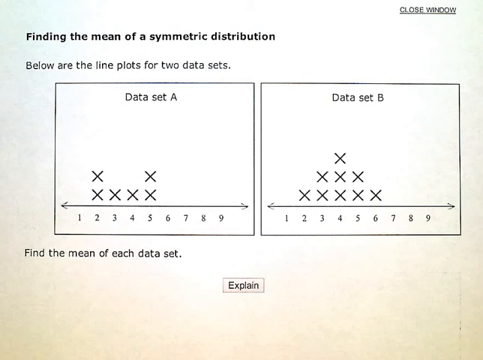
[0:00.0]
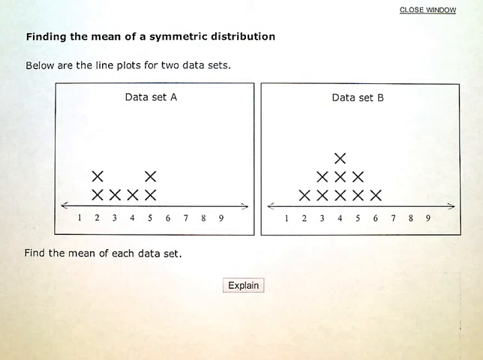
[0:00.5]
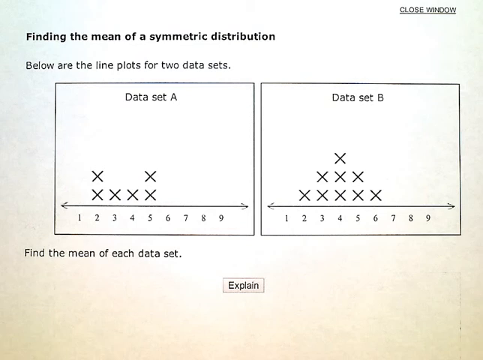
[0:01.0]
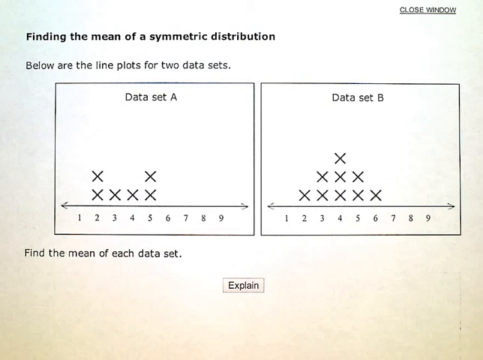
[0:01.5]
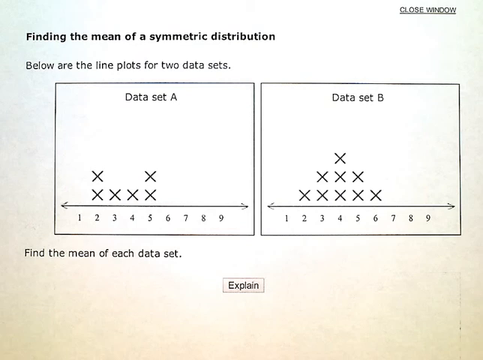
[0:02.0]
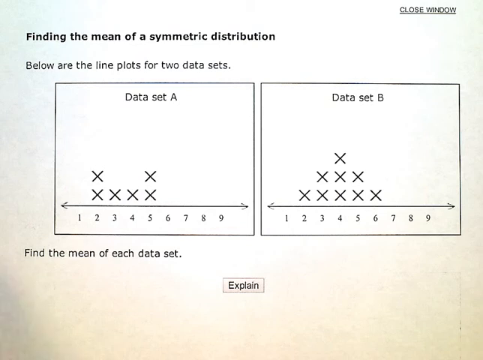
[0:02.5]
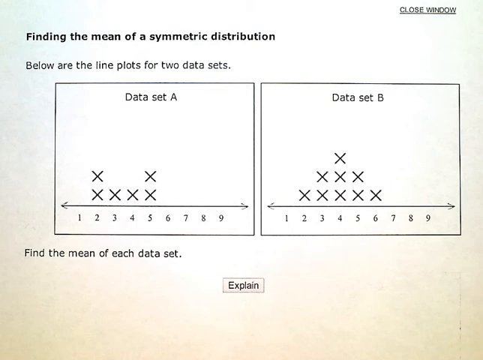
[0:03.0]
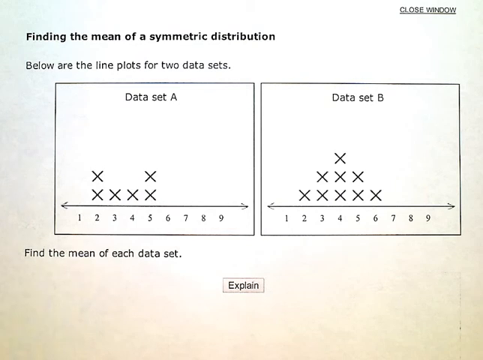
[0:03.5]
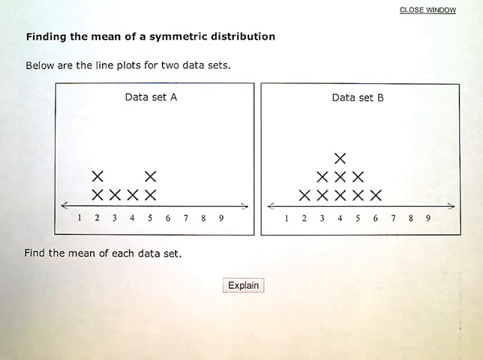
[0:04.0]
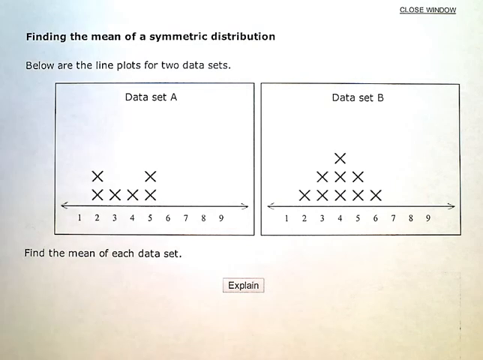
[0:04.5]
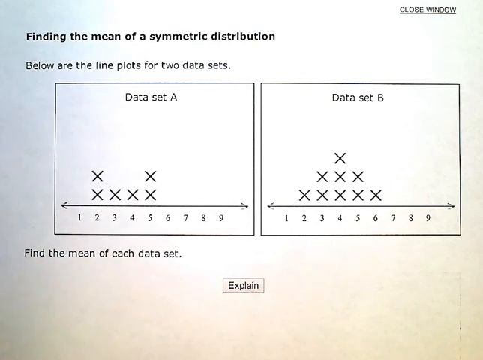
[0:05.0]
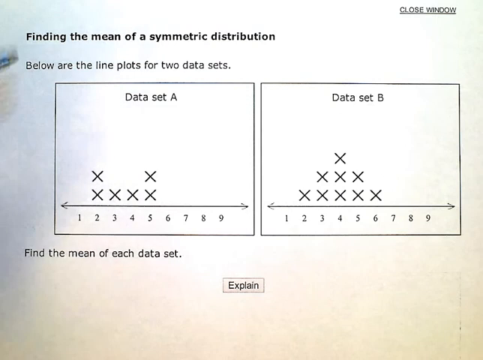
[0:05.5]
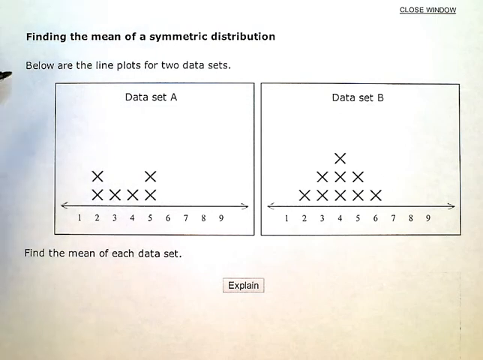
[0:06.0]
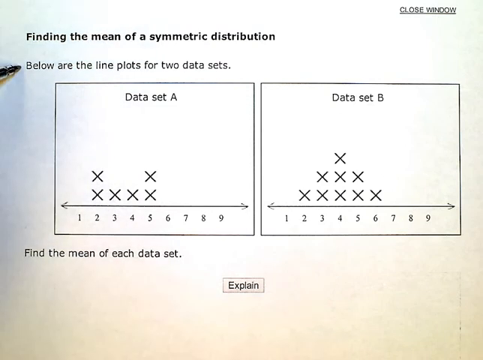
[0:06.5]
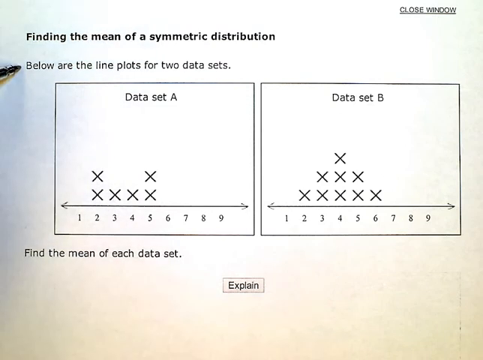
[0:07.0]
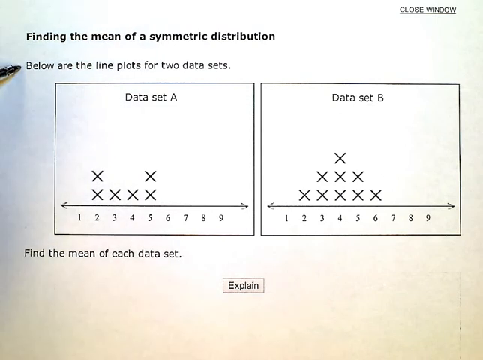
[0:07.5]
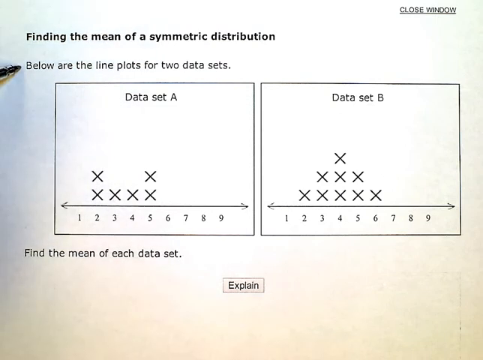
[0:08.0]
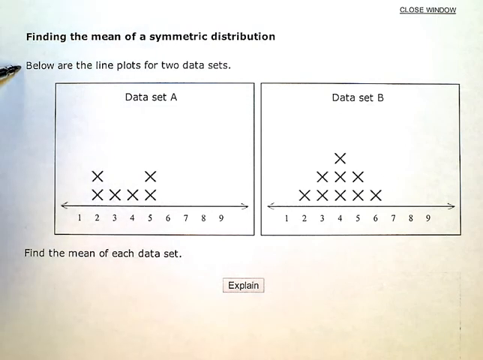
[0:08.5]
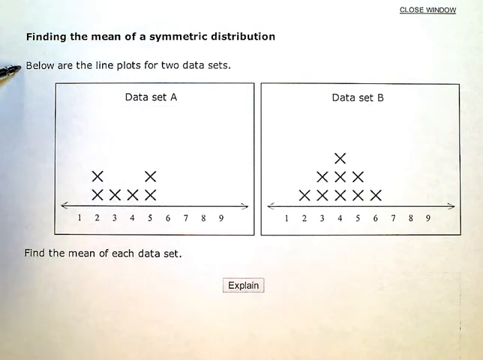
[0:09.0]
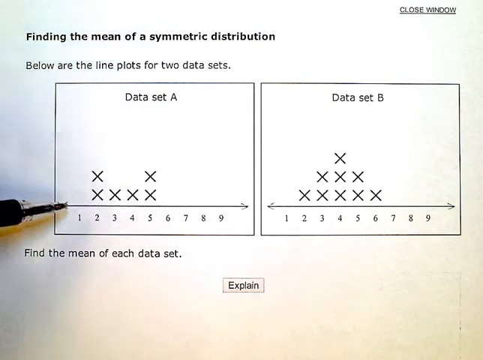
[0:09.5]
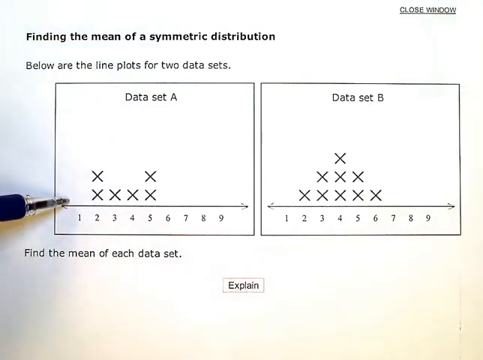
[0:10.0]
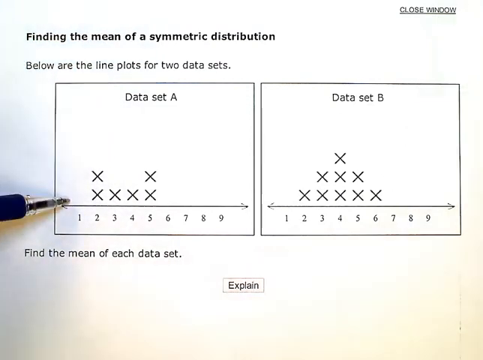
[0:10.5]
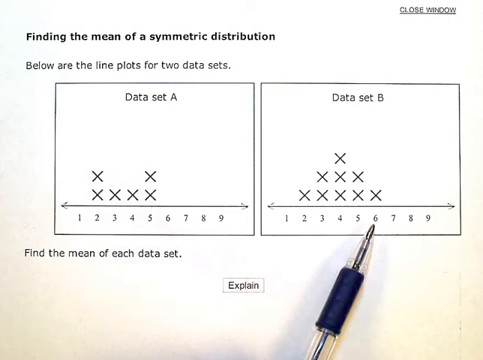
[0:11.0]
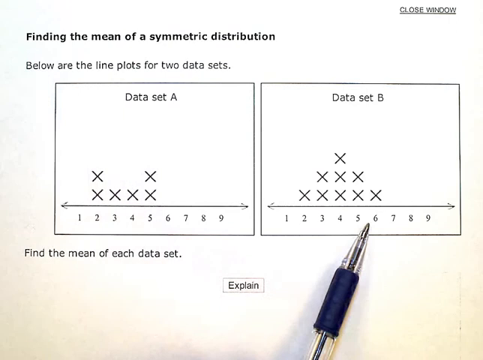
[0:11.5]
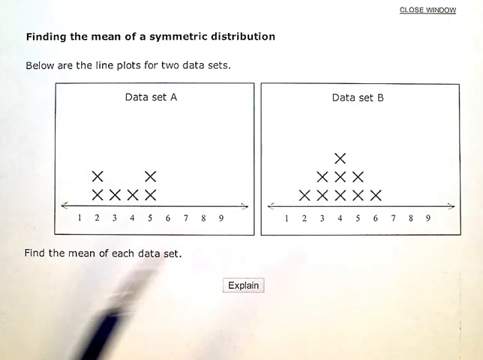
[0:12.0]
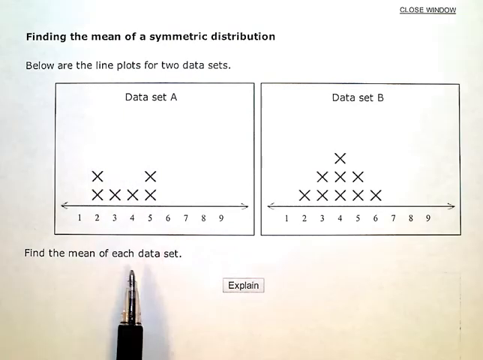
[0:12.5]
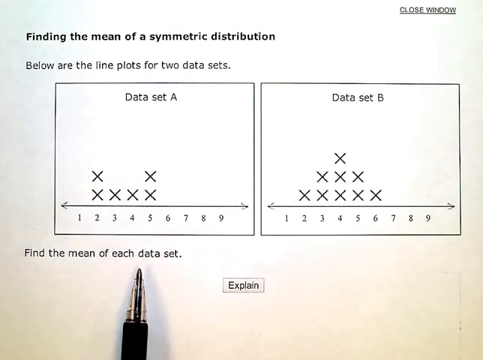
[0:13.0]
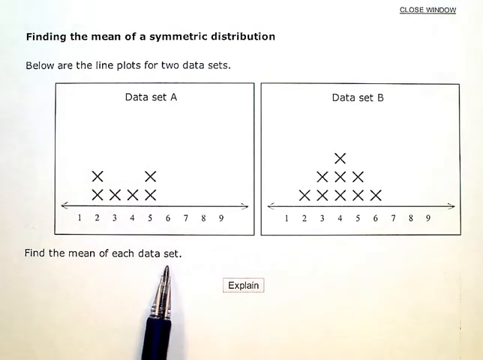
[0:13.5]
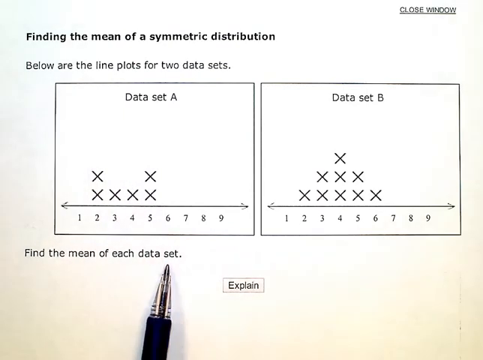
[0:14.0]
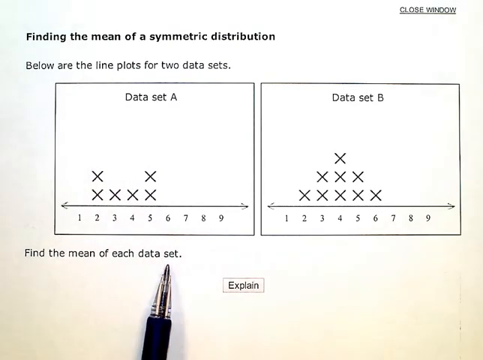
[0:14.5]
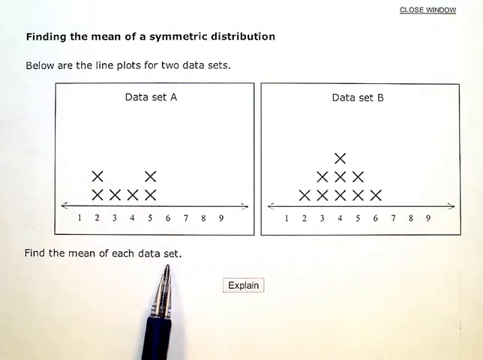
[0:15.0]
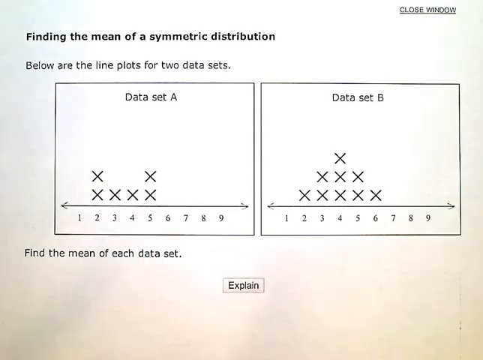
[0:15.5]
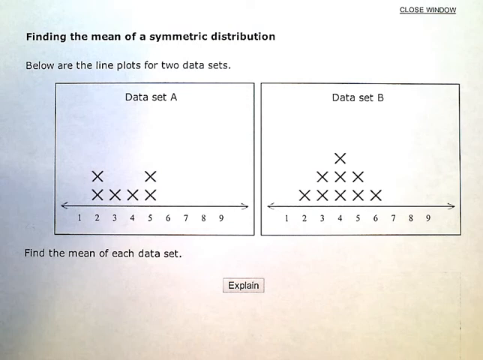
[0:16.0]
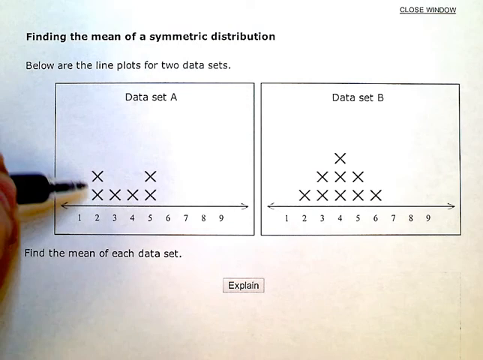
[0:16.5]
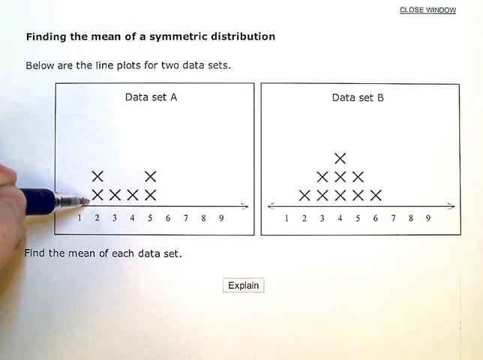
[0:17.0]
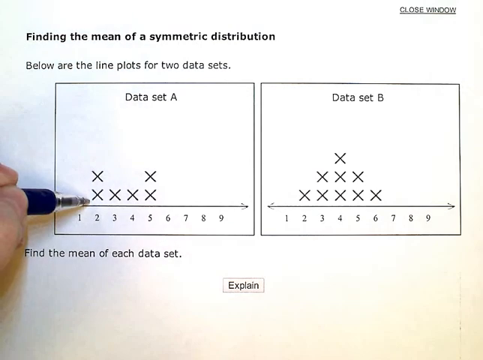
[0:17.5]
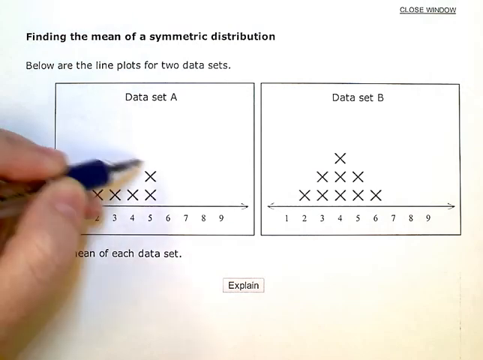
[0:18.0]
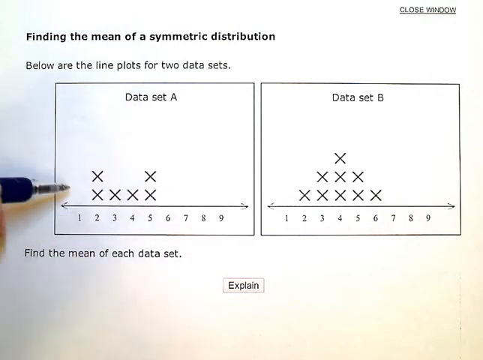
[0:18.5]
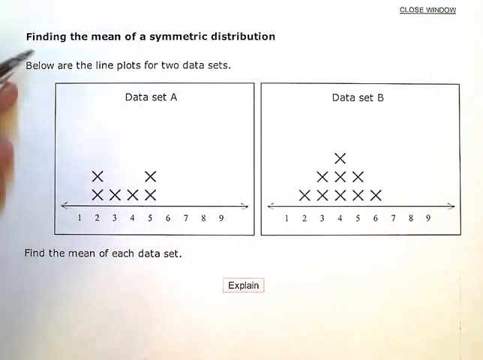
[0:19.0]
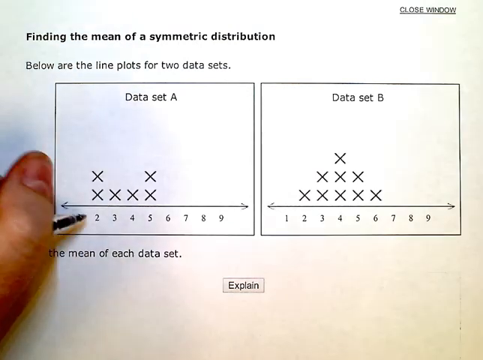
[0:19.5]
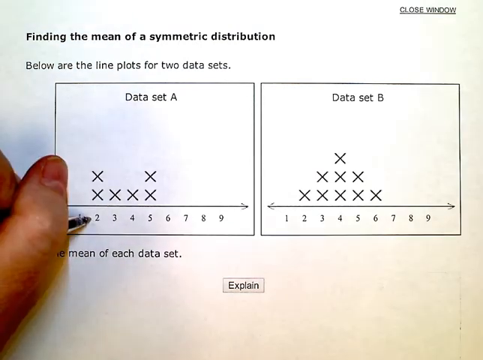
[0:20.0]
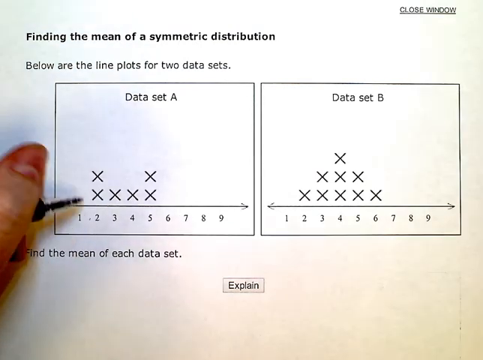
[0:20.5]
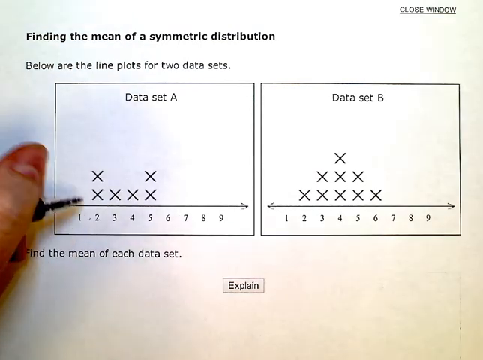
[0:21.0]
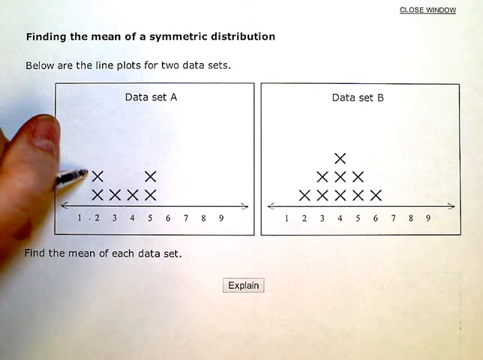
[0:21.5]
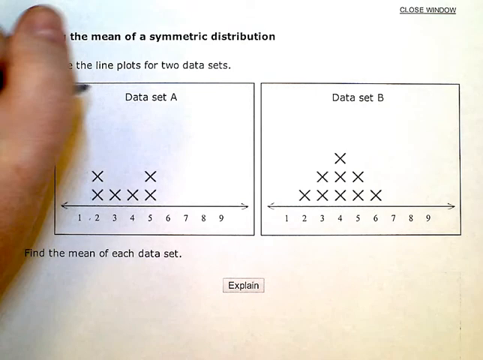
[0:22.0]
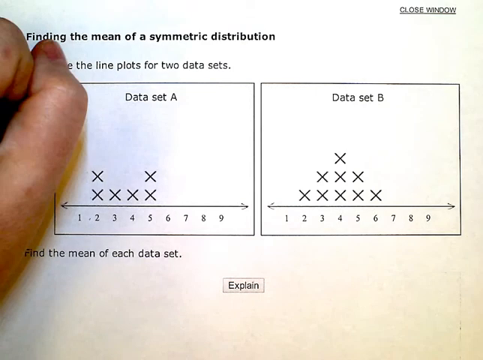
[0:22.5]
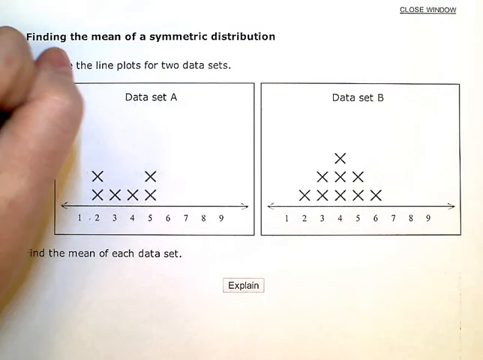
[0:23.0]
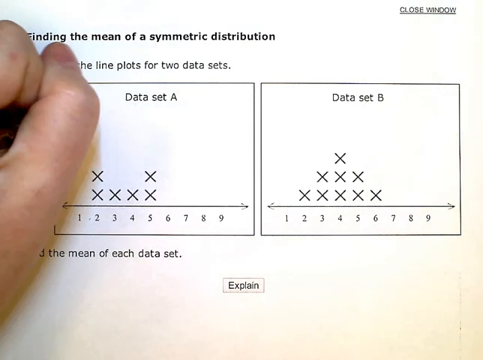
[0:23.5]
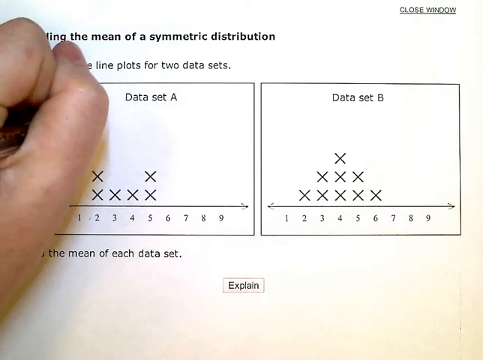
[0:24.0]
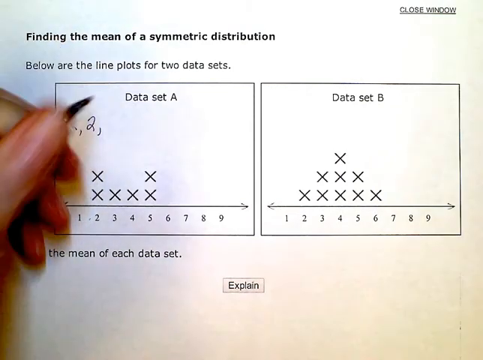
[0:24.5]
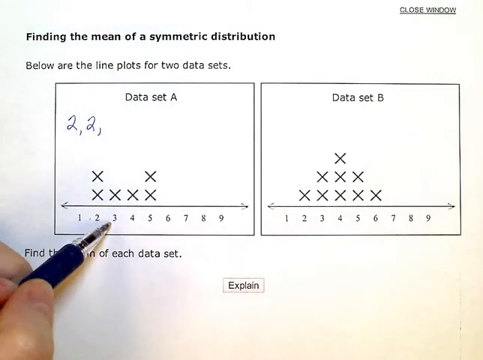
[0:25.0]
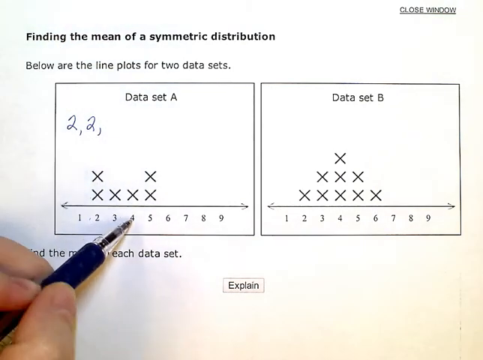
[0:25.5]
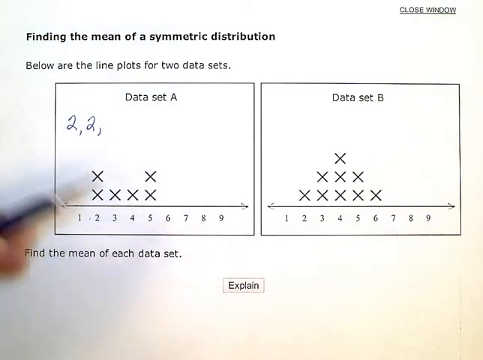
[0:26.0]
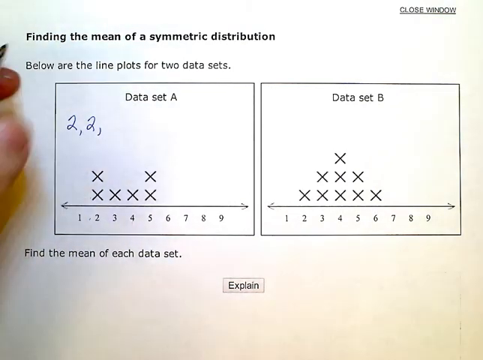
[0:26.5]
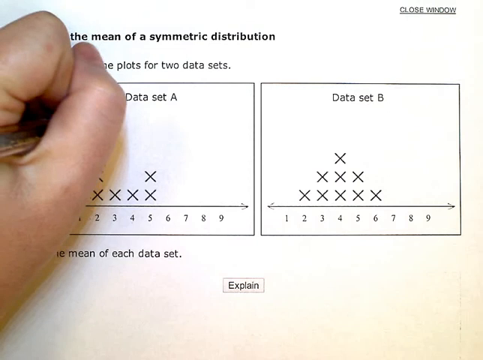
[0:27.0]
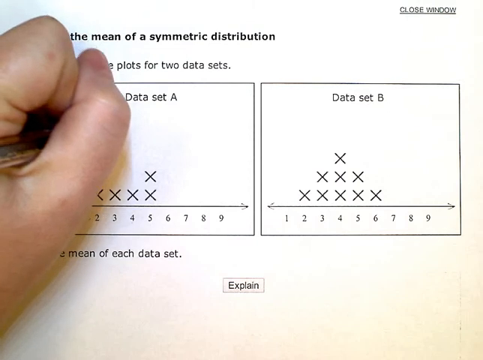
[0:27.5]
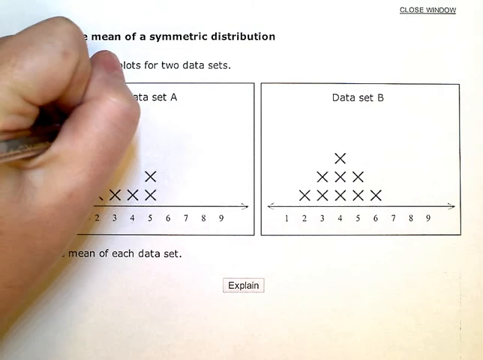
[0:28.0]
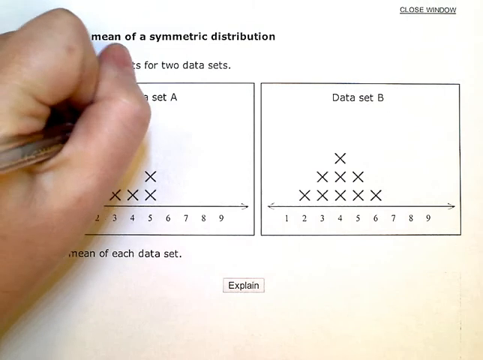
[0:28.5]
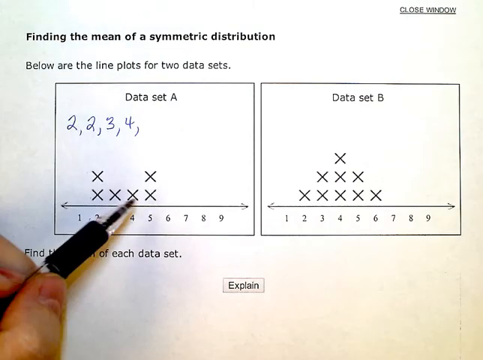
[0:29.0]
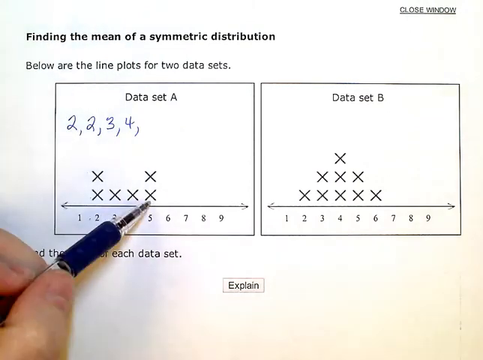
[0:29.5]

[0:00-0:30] A math problem titled "finding the mean of a symmetric distribution" appears in bold. There is a close-window button at the top right, but the page looks like a worksheet, almost like a photocopy of a piece of paper. Underneath the title, in unbolded text, it says "below are the line plots for two data sets." There are two boxes, data set A and data set B, with the text kind of centered. X marks show the data. In data set A, there are two x's stacked on top of each other at 2, one x at 3, one x at 4, and two x's at 5; 6 through 9 have none. Data set B is almost like a pyramid: one x at 2, two at 3, three at 4, two at 5, and one at 6. The text says "find the mean of each data set." The data set A box is at the bottom left, and underneath in the middle there is an "explain" button. Someone uses what looks like a ballpoint pen to point to different parts of data set A and to follow each line of the text under the find-the-mean instruction. The person appears to be left-handed. They begin writing numbers inside the data set A box, writing "2," and then 2 again for the two x's.